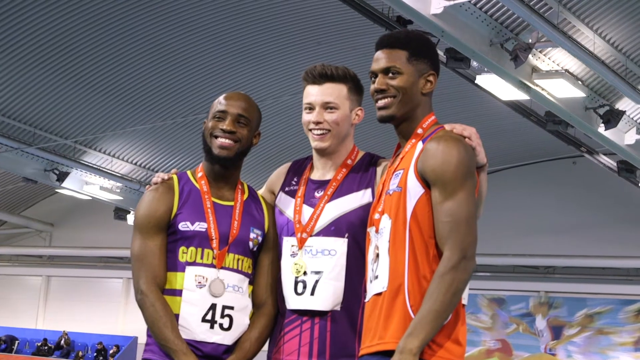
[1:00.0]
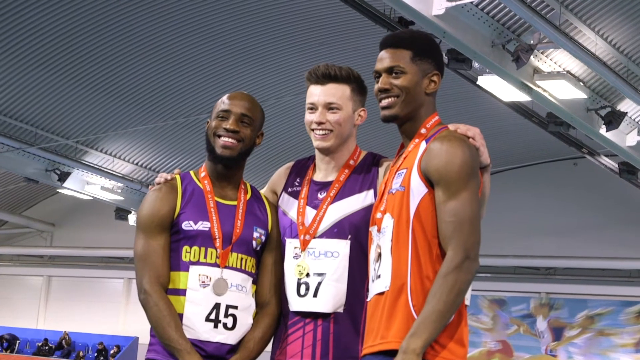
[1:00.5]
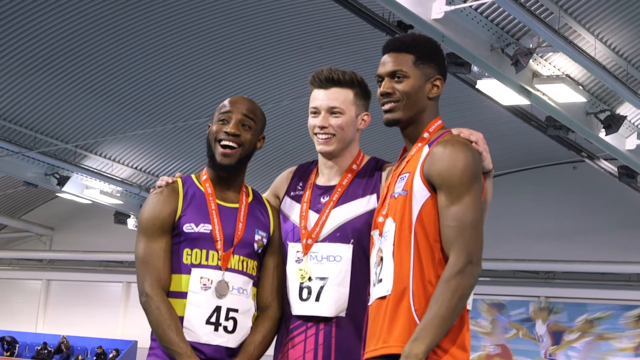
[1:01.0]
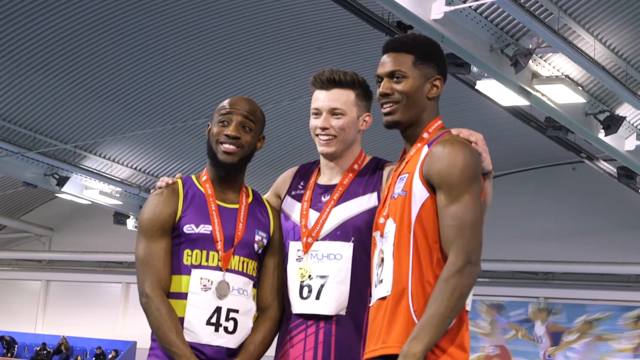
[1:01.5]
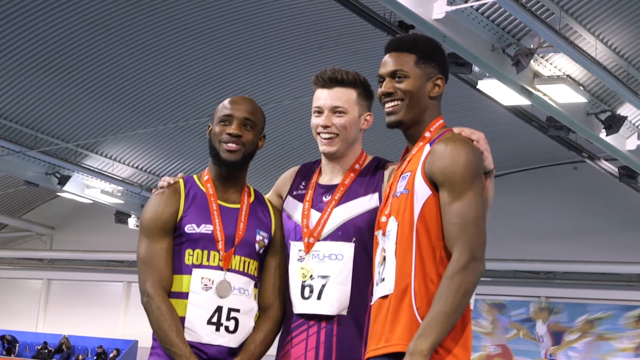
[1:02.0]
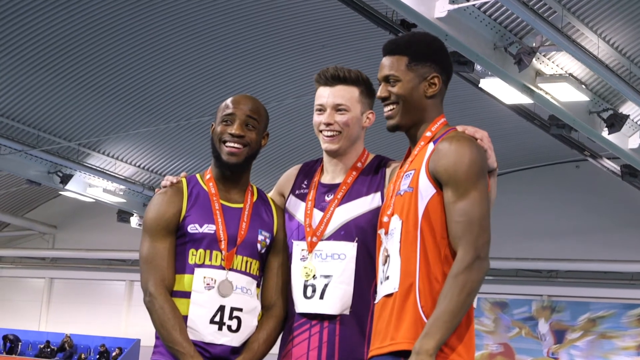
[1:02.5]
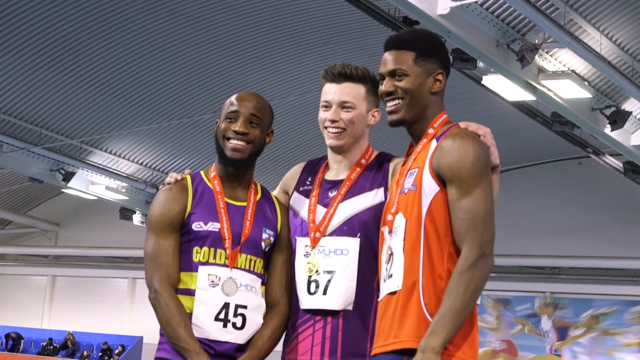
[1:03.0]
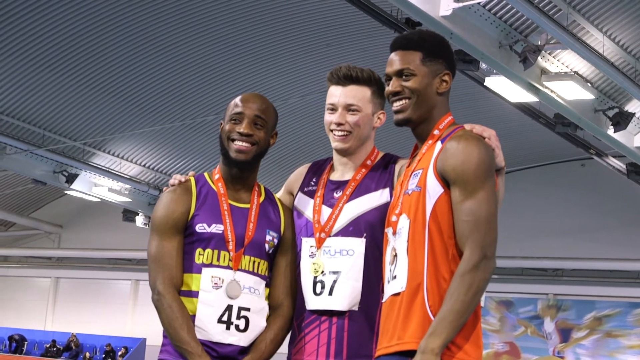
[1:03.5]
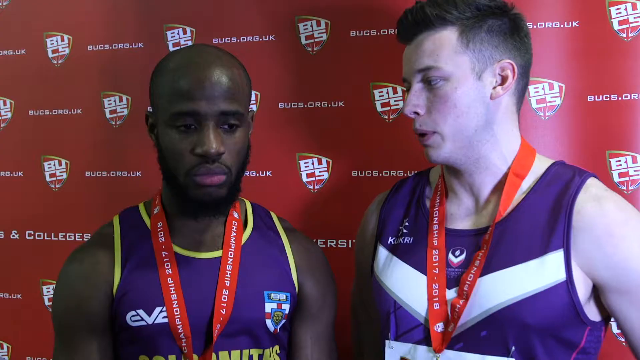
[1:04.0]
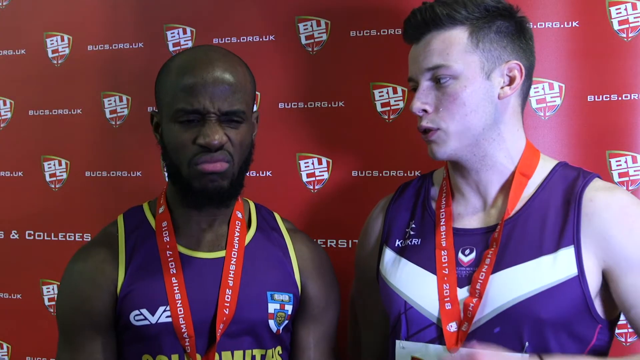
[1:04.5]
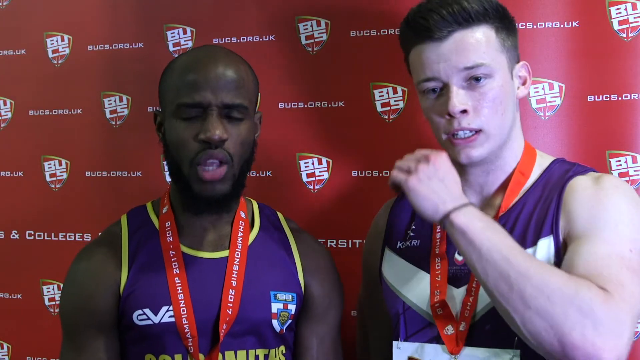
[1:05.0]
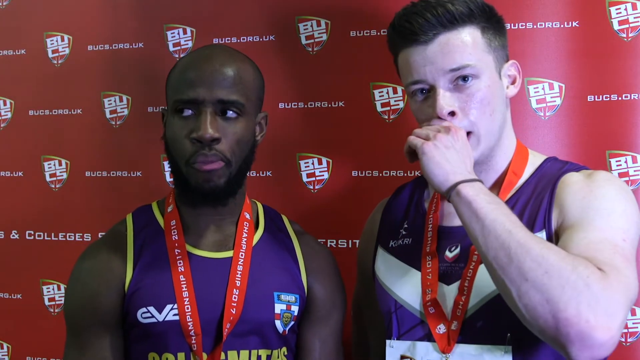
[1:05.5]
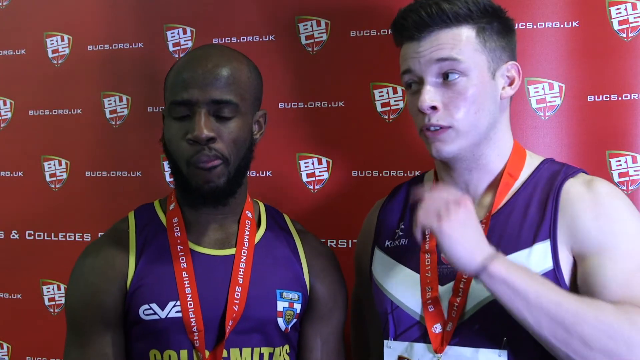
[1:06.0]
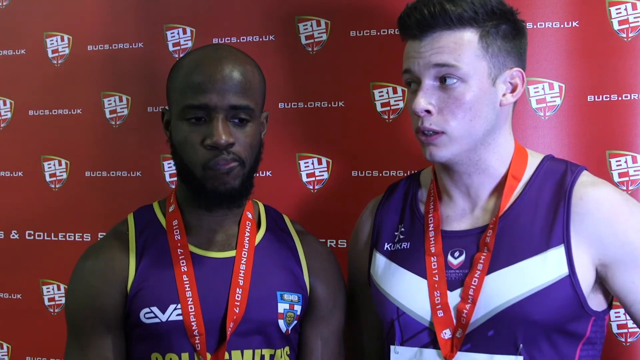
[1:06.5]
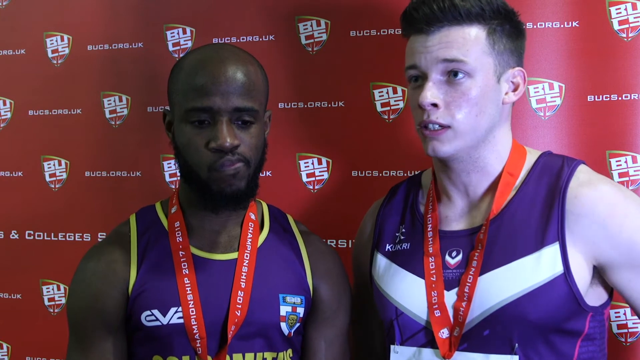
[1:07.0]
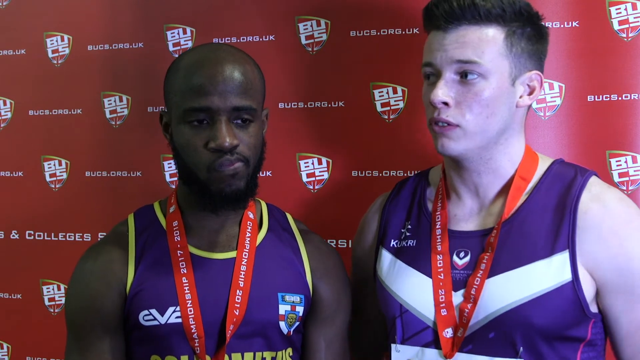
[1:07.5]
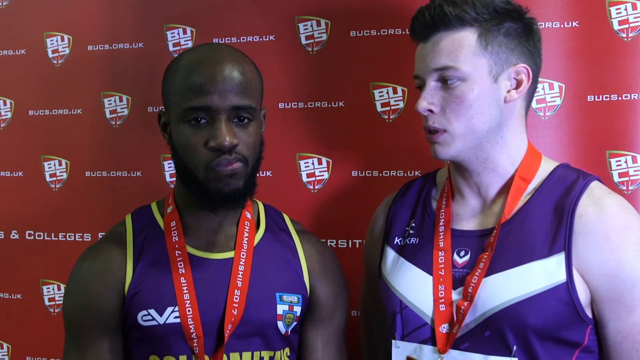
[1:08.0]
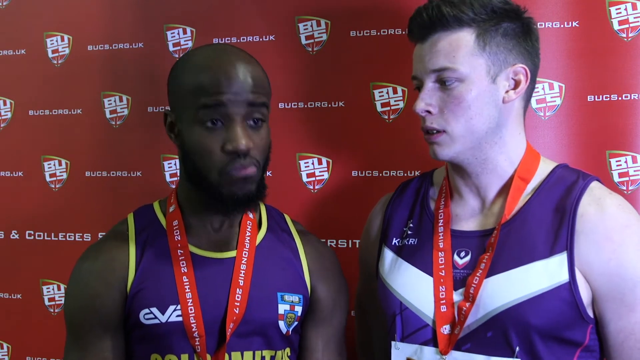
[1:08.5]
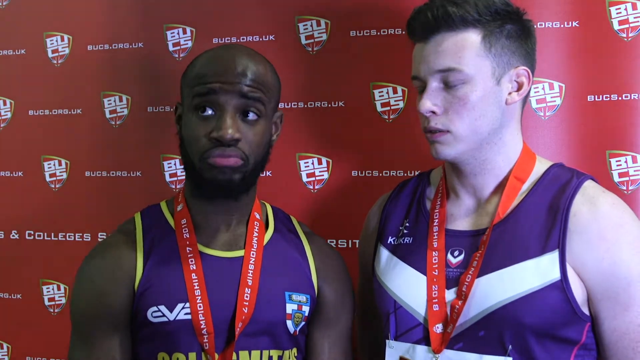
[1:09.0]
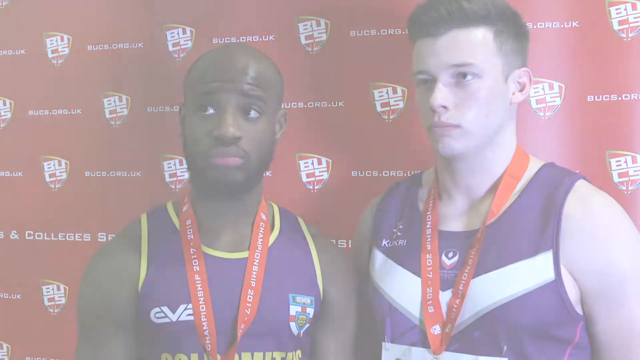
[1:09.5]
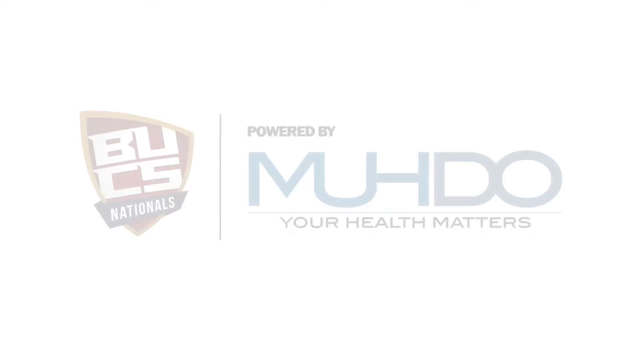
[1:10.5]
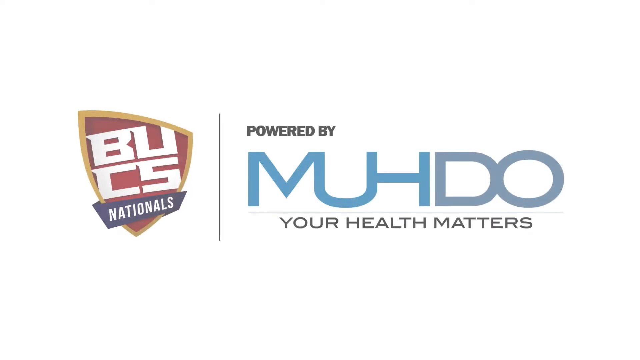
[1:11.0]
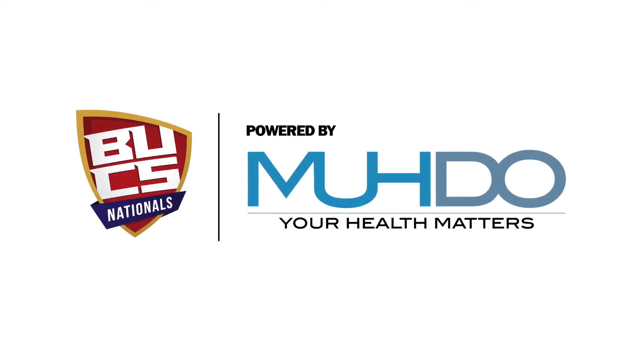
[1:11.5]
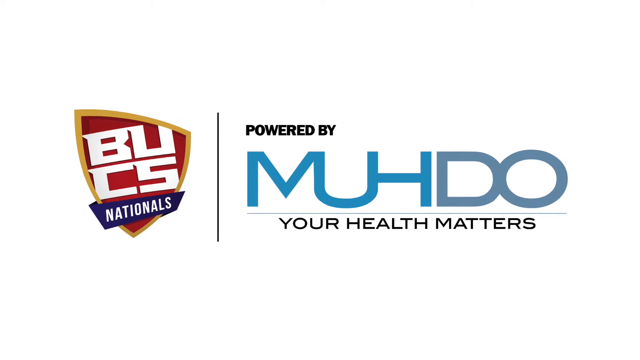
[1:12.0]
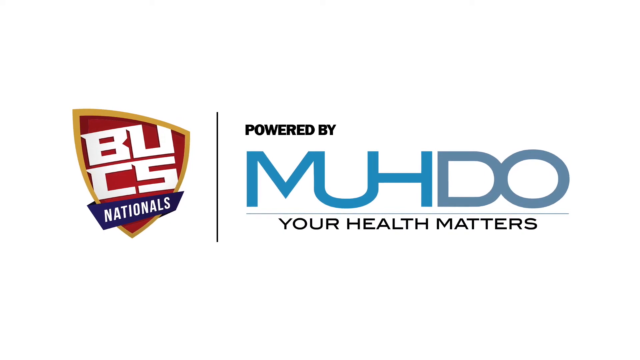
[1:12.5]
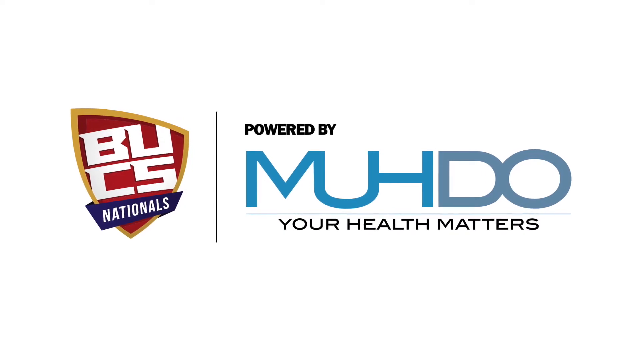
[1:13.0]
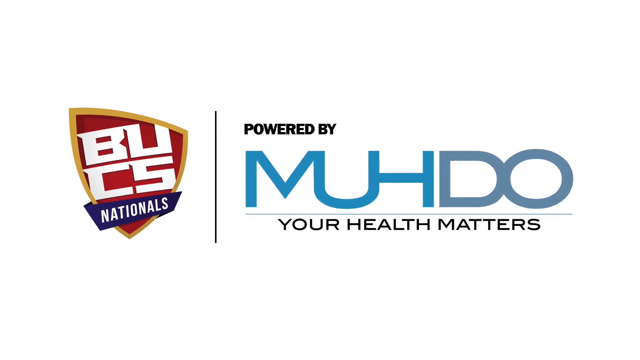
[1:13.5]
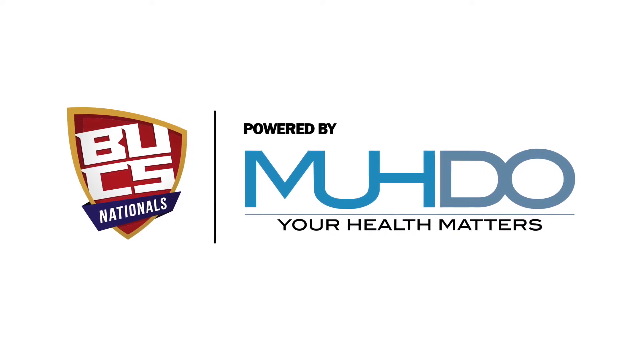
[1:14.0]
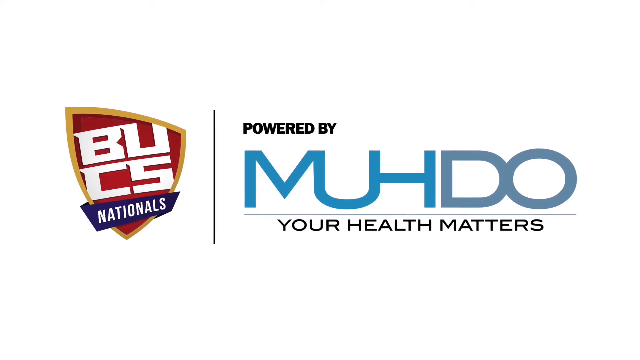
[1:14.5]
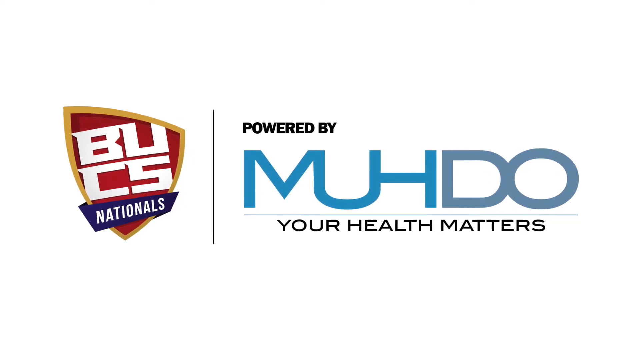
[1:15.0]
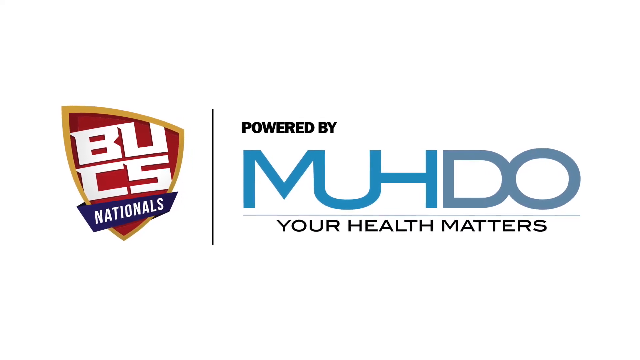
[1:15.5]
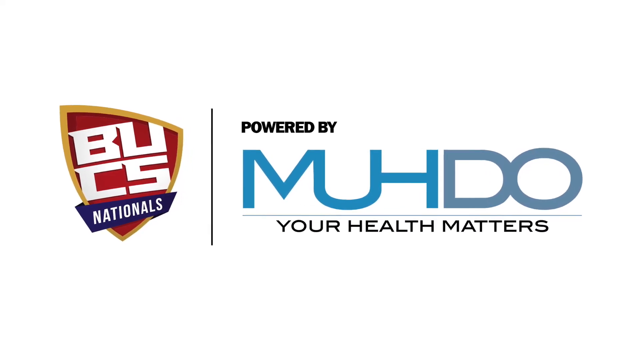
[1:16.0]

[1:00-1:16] Three athletes stand side by side, smiling, with medals around their necks. On the left is a black man with a bald head and a full beard, the shortest of the three, with the number 45 on the front of his purple tank top. The athlete in the middle is the second tallest, with the number 67 on the front of his purple tank top. The athlete on the right is the tallest, a black man with a full head of hair; his number is not visible because he stands slightly sideways. The three smile and laugh, showing white teeth, as they pose for a photograph; the photographer is not seen. Next, two of the athletes are side by side: the shortest, a black man, and the taller middle one, a white man. The white man speaks while the black man nods in agreement. The video ends on a screen showing a red shield trimmed in yellow, with "BUCS Nationals" written on it in white, and to its right "powered by MUHDO, Your Health Matters", which stays on screen until the end.